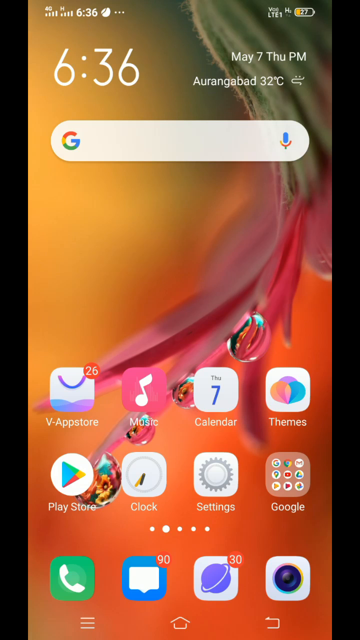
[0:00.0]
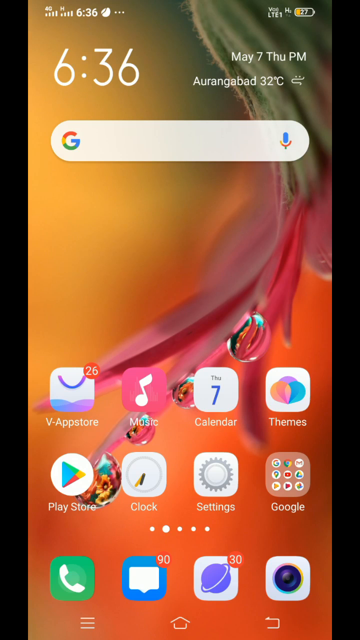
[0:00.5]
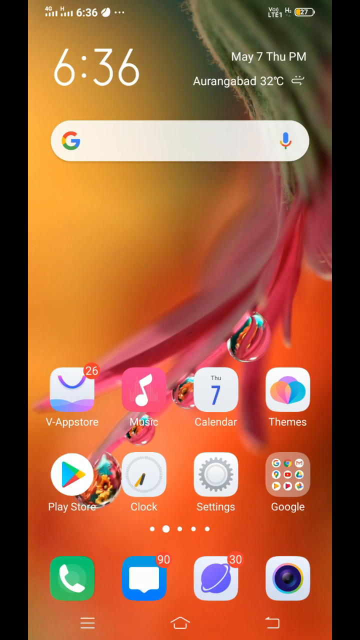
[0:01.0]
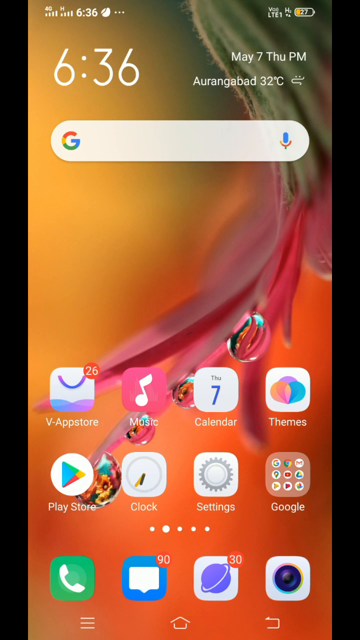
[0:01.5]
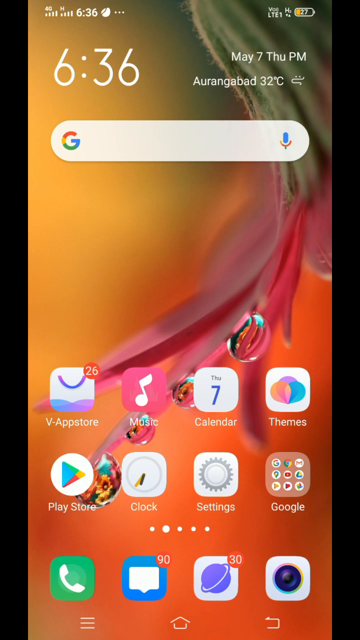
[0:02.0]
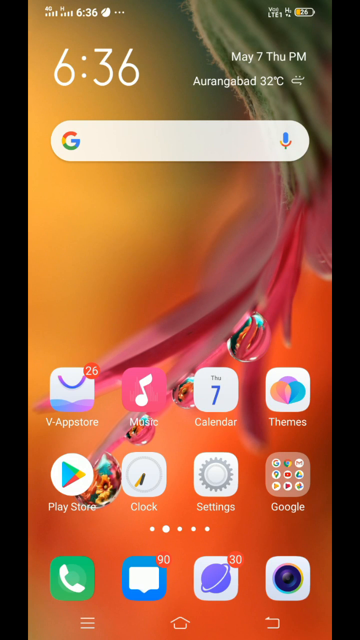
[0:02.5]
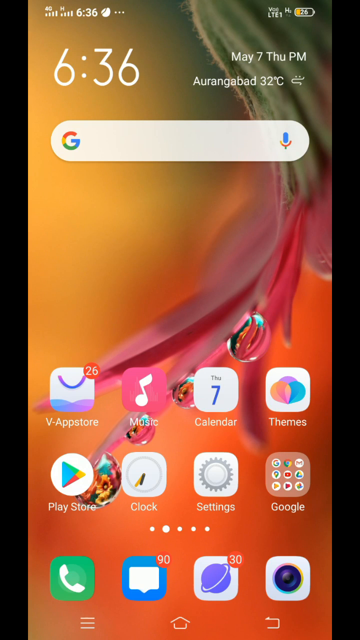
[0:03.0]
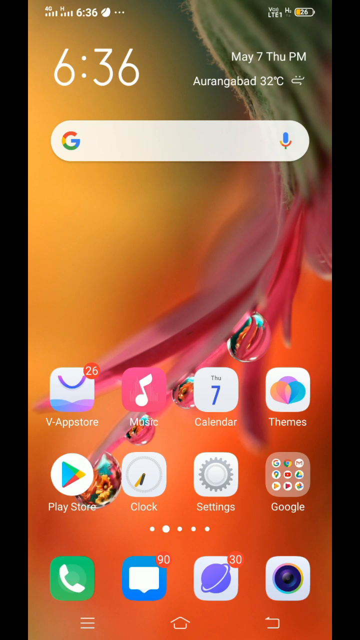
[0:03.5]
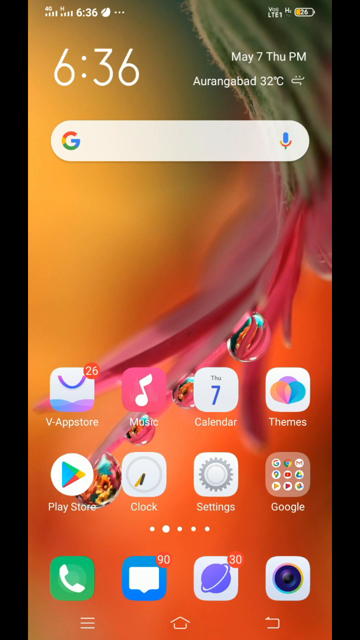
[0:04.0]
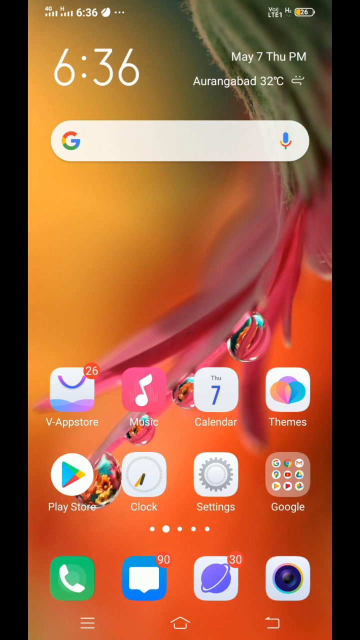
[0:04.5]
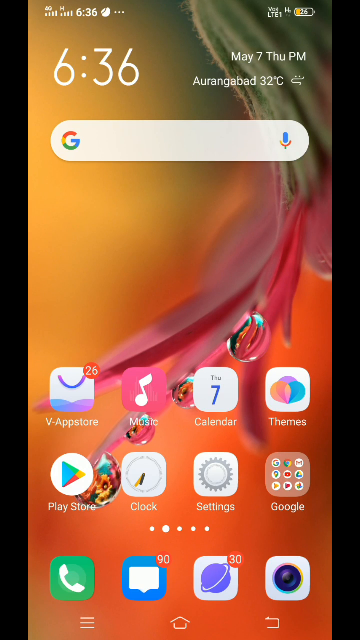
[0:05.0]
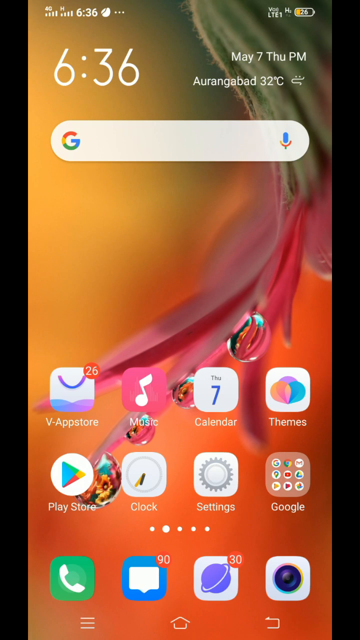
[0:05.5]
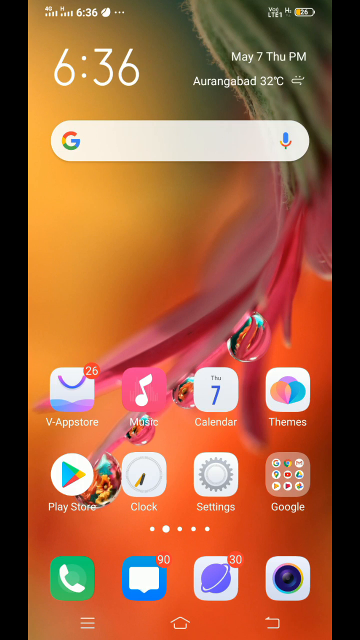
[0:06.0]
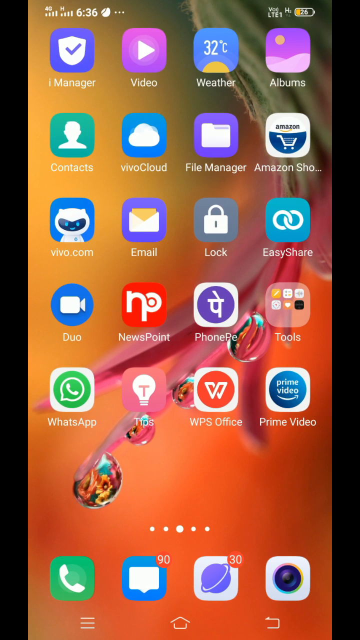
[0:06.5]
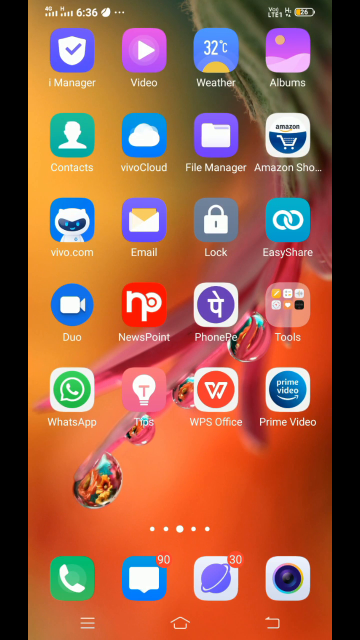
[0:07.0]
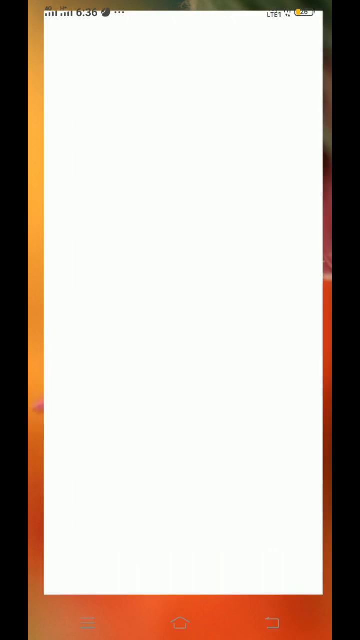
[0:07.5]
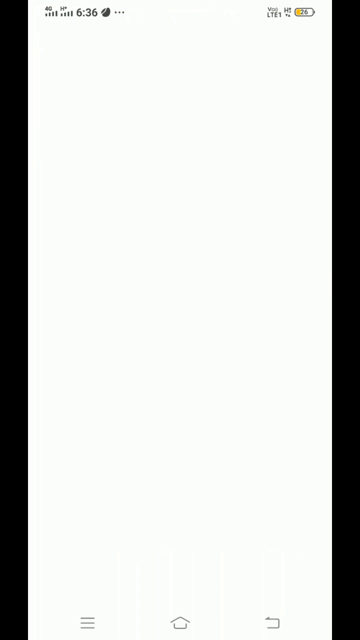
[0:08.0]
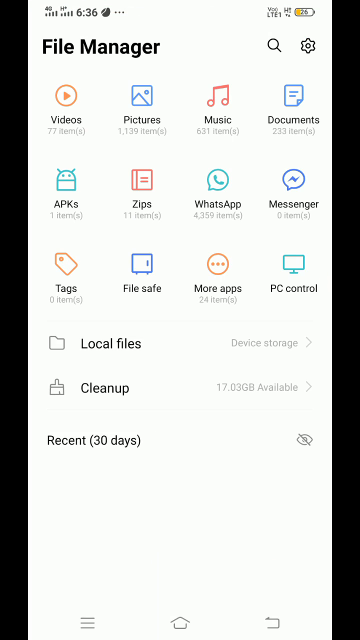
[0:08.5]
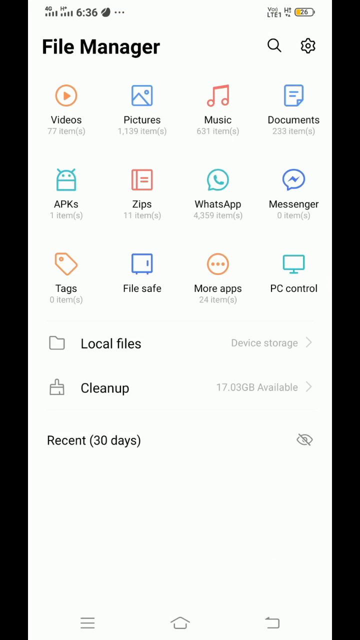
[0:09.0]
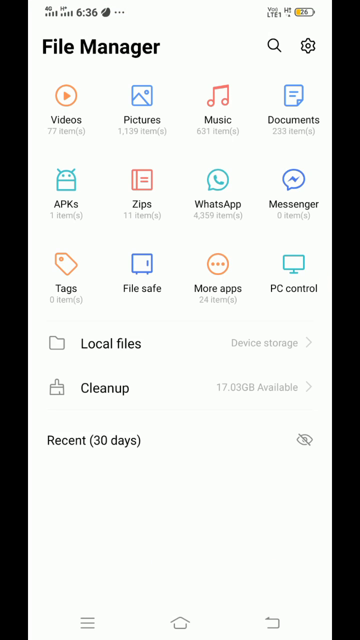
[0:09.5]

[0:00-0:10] The video opens with what appears to be a screen recording of a phone; judging by the layout of the home screen, it appears to be an Android phone. The home screen background appears to be a droplet of water at the end of a hanging flower. The time at the top reads 6.36, and at the top right are May 7th, Thursday p.m., the location Auarangabad, and 32 degrees Celsius. Various apps are arranged at the bottom of the phone in three rows and four columns. The view moves across to the next home screen, which has five rows of four columns, with four permanent options in a row at the bottom, including telephone and camera. One of the apps flashes as if it has been pressed; it is the one labeled file manager. A white screen zooms up to take over the entire screen except for the battery and time data at the top. The white screen then populates as icons appear under the title file manager: three rows of four columns of icons, and underneath them options for local files, clean up and recent 30 days.